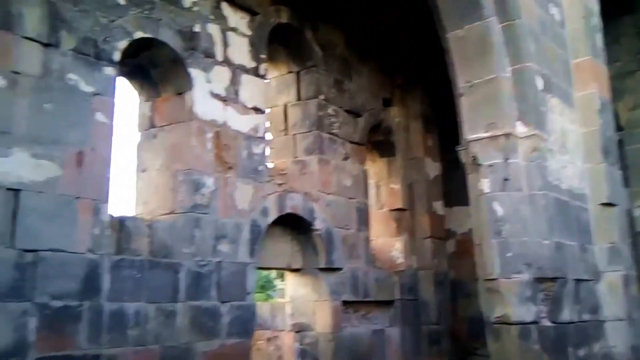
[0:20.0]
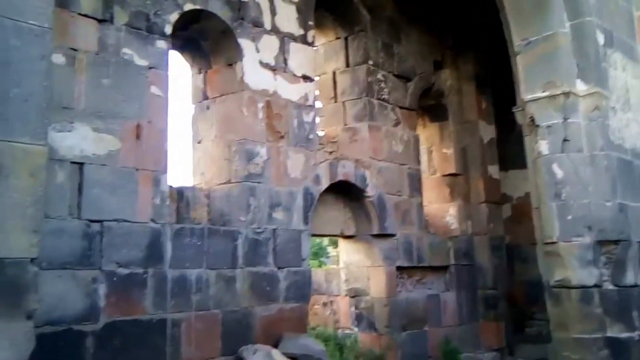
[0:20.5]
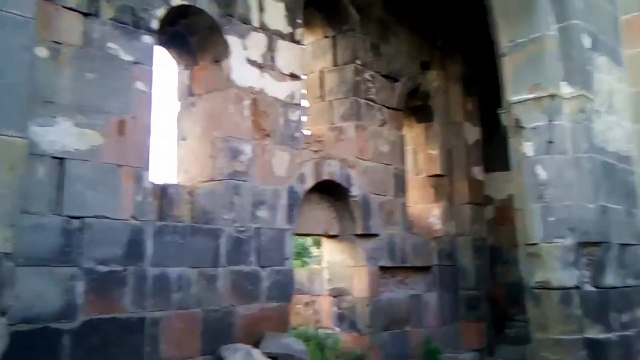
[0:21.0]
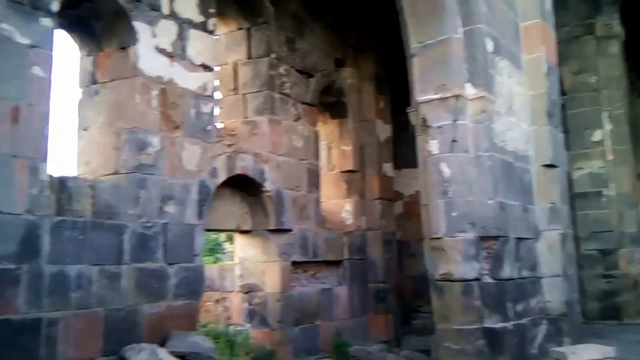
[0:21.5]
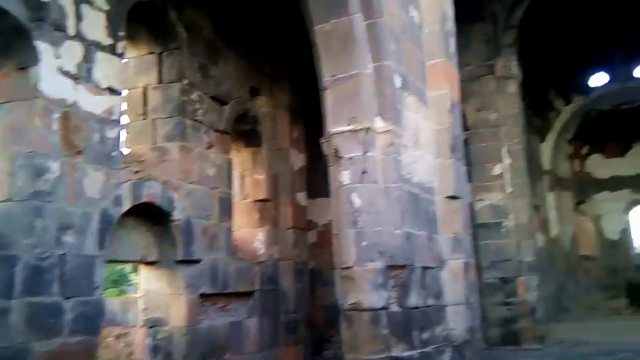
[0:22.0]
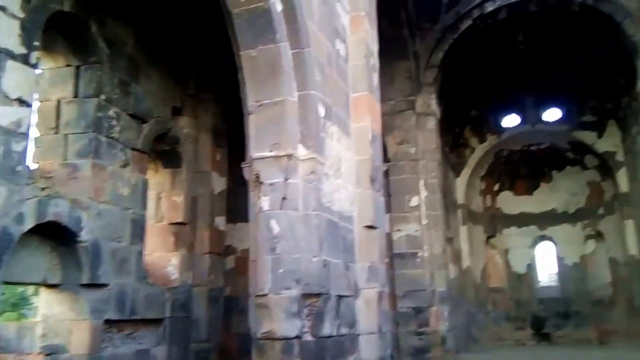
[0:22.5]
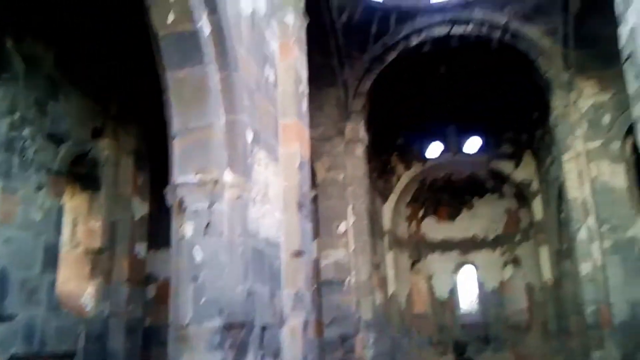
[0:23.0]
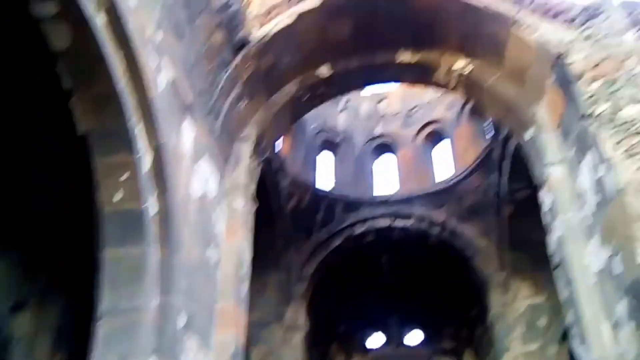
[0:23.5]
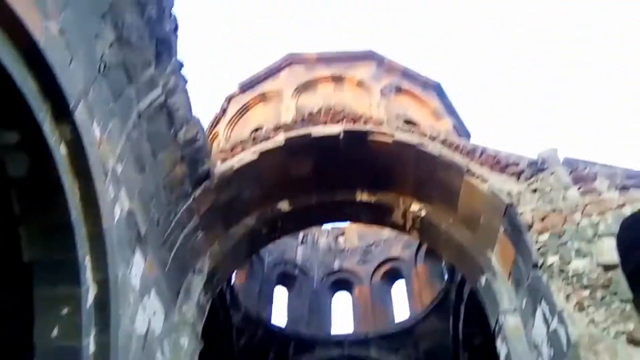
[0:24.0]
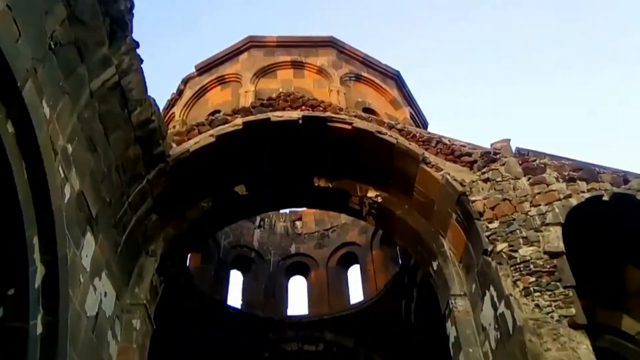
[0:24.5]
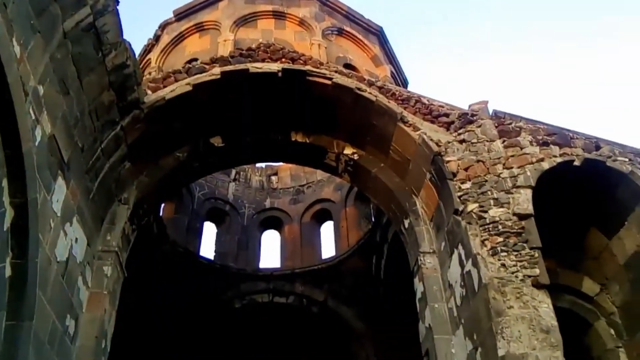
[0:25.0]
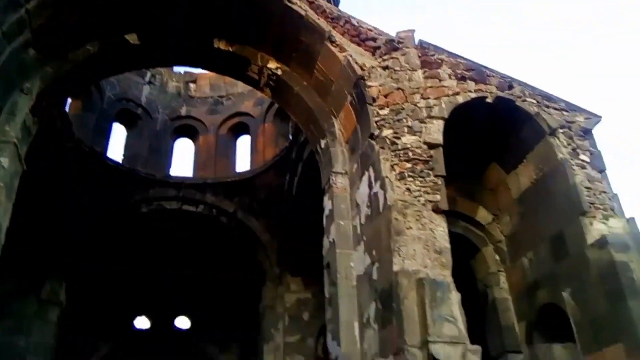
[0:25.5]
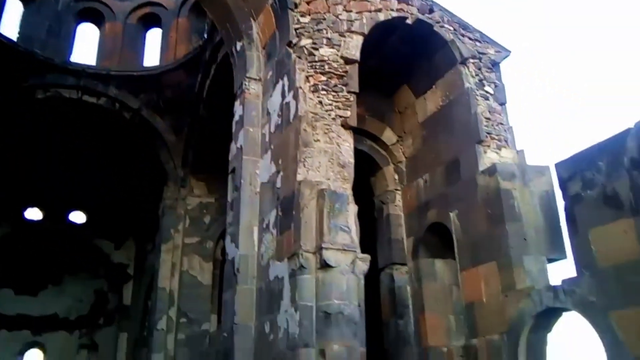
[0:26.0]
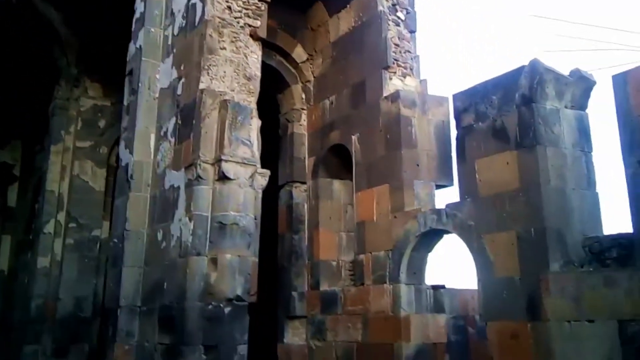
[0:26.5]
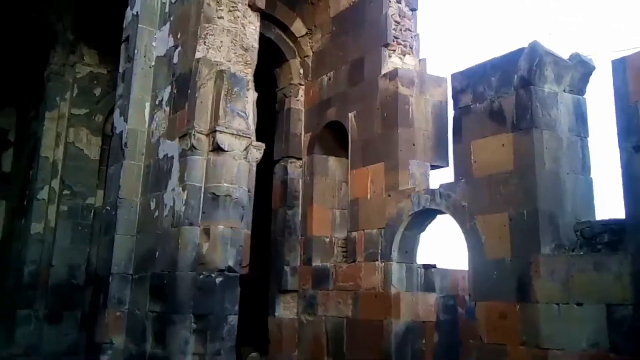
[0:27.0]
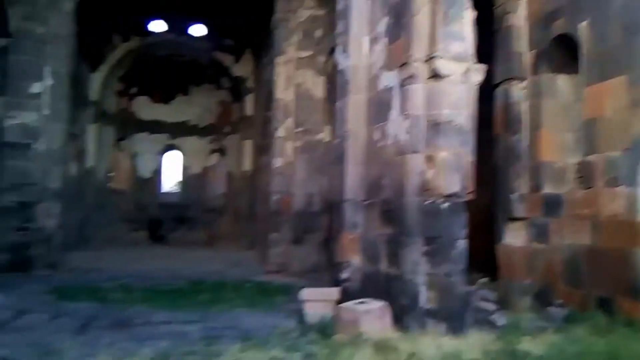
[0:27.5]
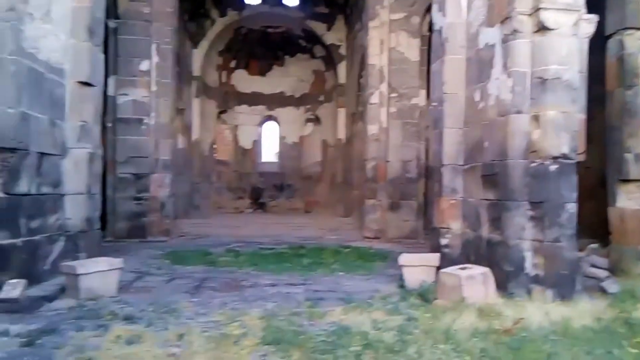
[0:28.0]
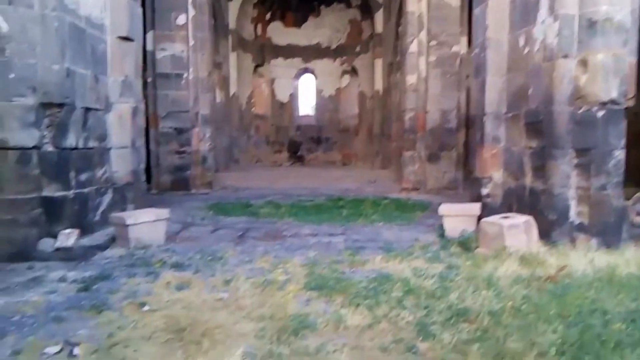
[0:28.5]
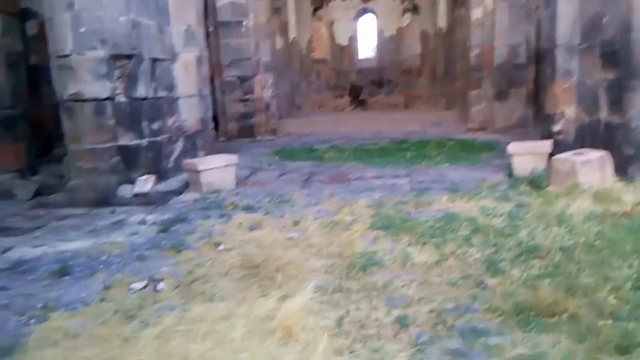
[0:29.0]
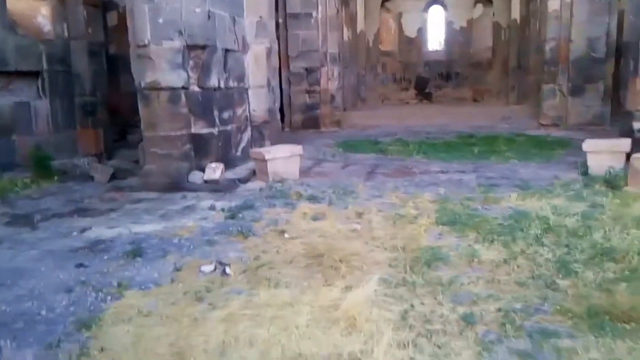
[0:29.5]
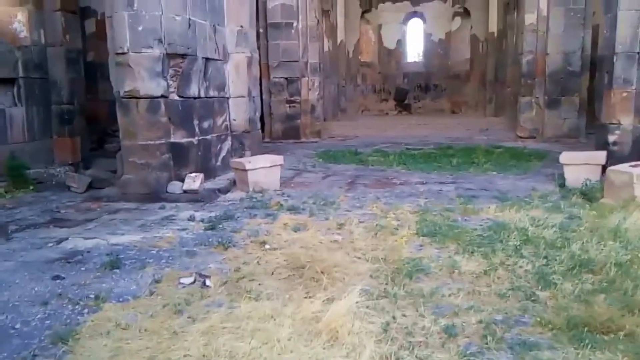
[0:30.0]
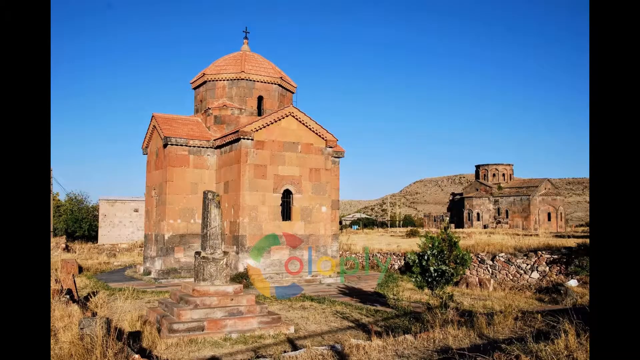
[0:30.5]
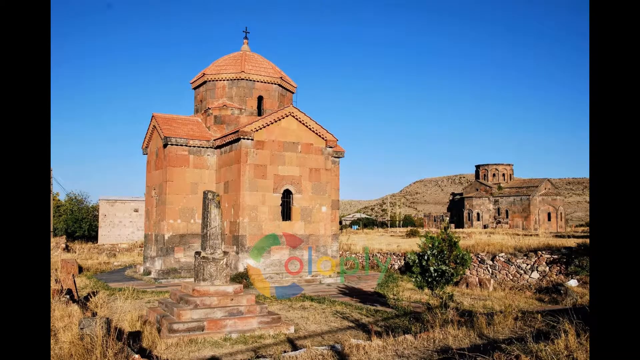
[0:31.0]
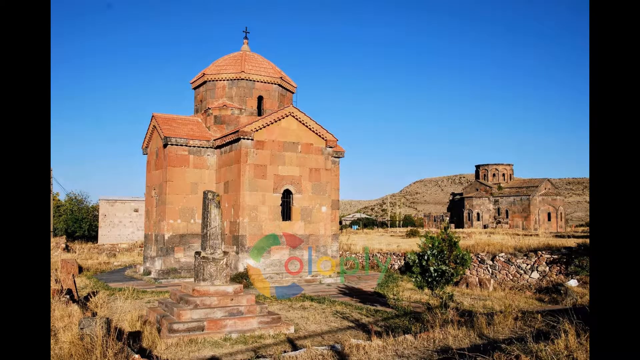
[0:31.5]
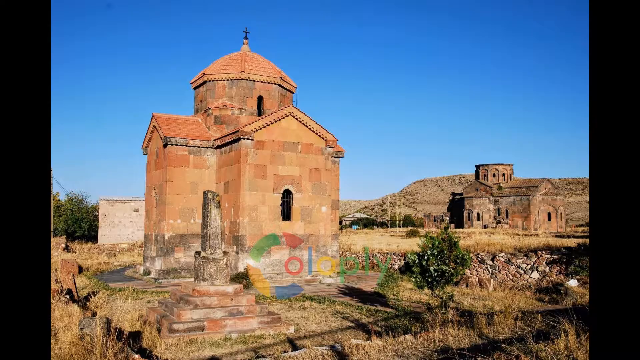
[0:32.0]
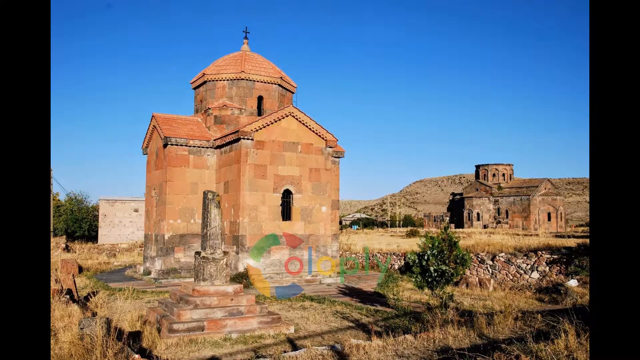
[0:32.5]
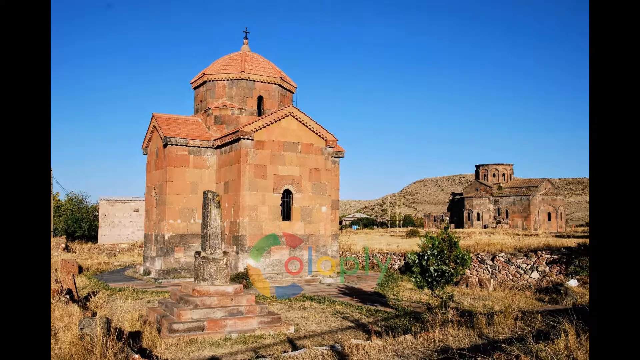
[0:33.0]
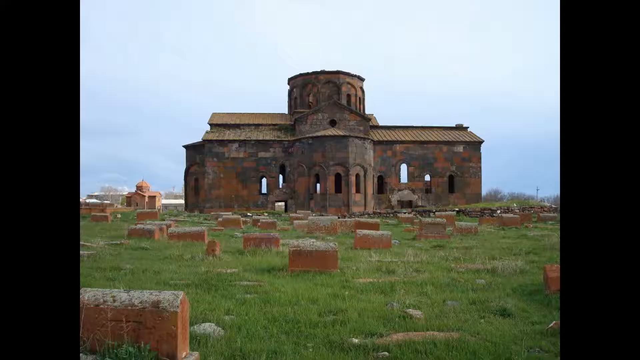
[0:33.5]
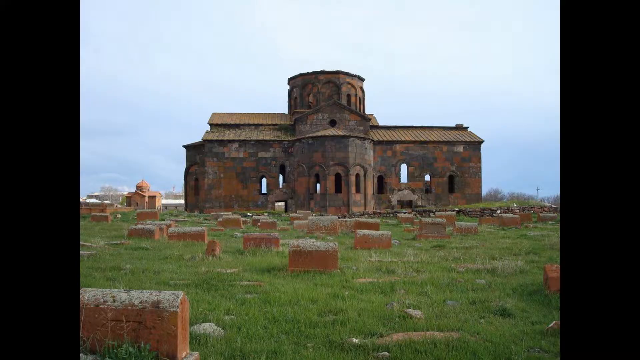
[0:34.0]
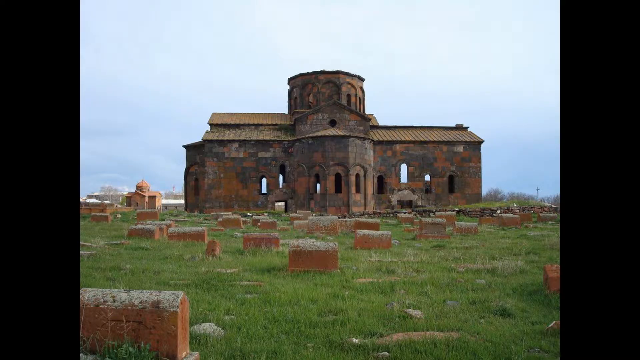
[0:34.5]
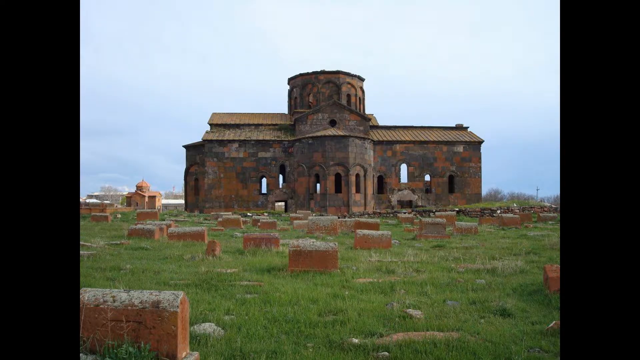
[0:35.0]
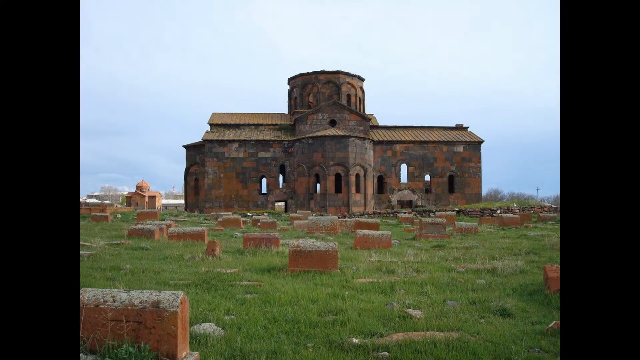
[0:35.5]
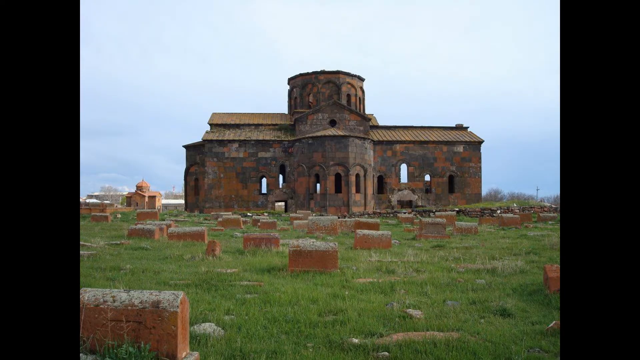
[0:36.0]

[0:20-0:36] A structure, most likely built hundreds of years ago, appears to be possibly some type of old military installation. The top of it is like a turret, with windows facing out in all directions around its circular roof. The roof itself is gone; it was probably once a domed ceiling. Exactly what kind of building it was is unclear, but it looks more like a military installation than a church or home. Out in front of the building there is possibly a graveyard. The area around it is fairly barren, and in the distance other structures can be seen.